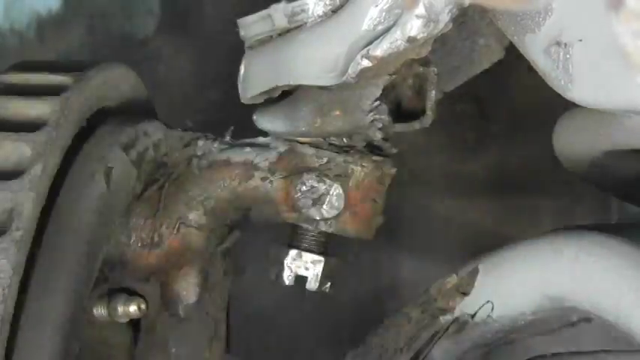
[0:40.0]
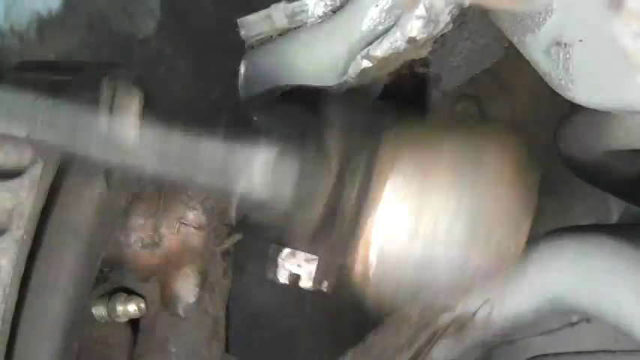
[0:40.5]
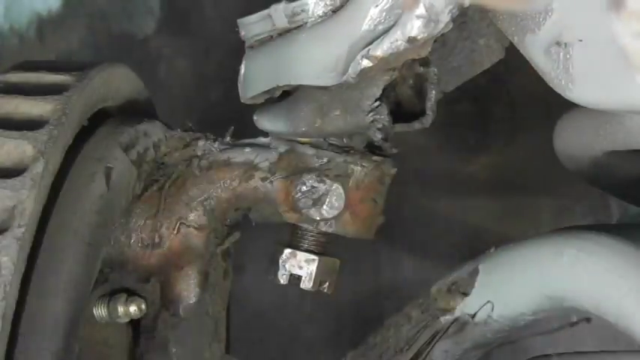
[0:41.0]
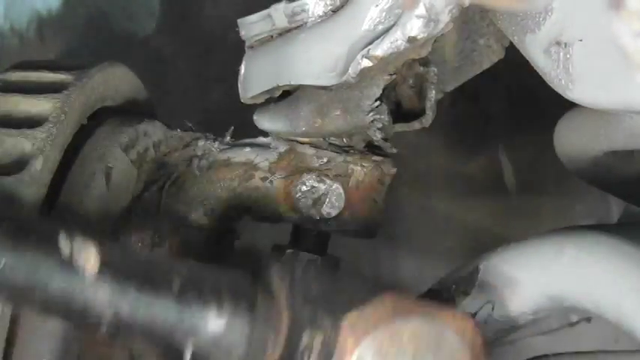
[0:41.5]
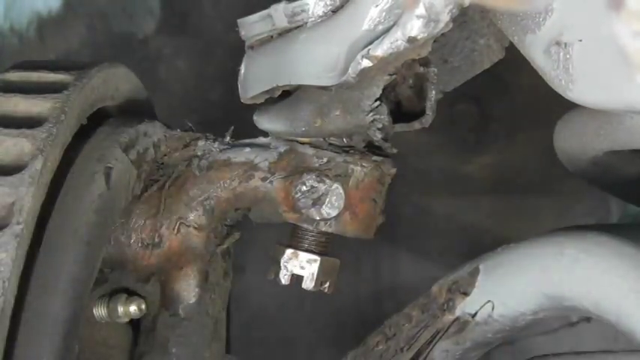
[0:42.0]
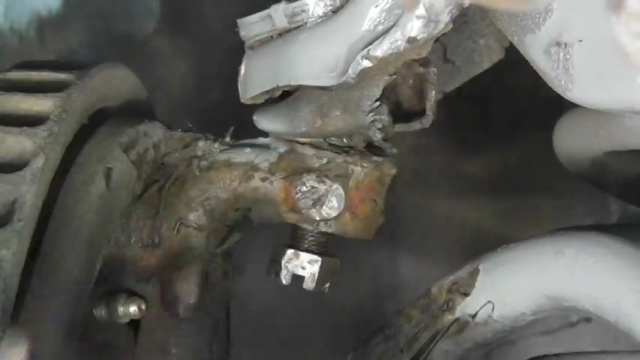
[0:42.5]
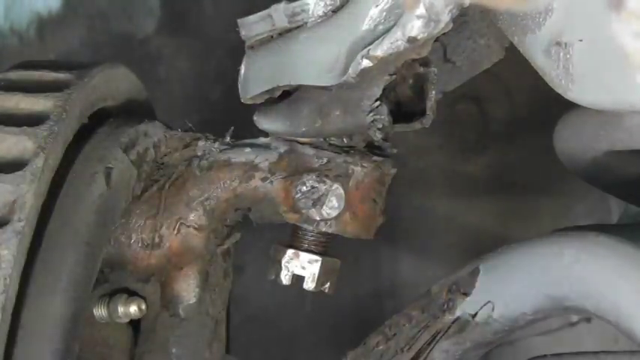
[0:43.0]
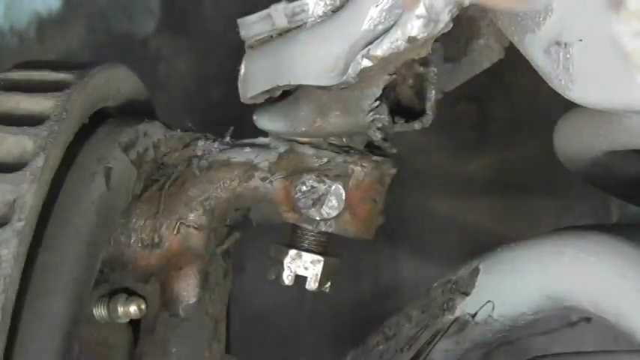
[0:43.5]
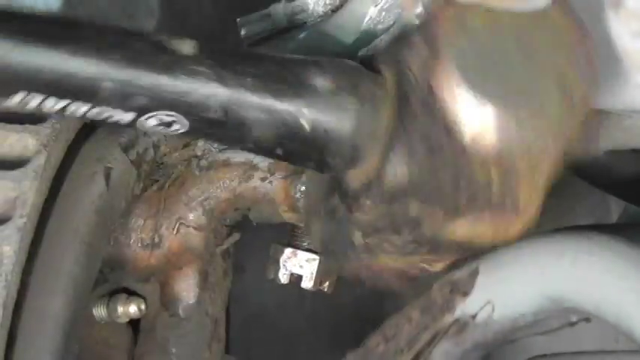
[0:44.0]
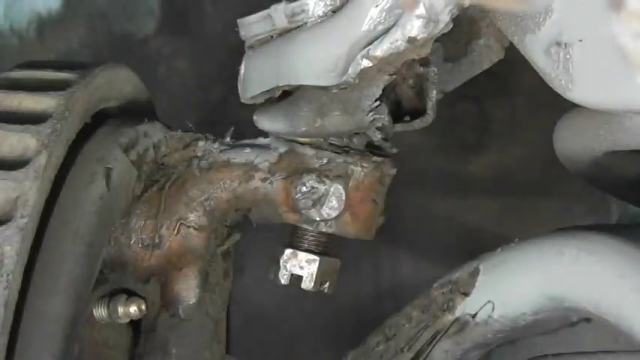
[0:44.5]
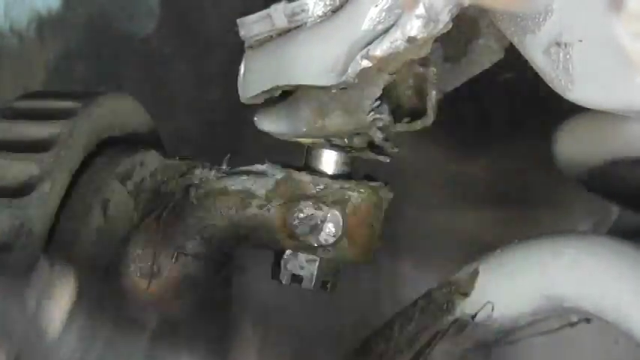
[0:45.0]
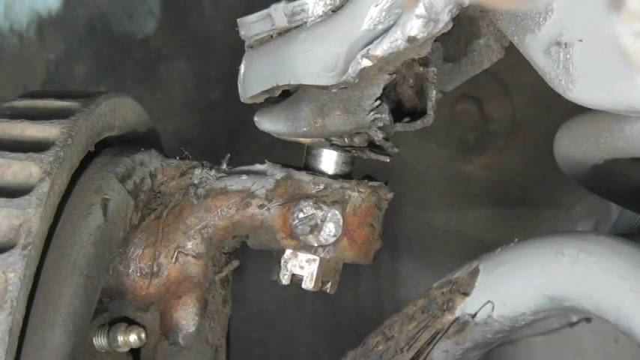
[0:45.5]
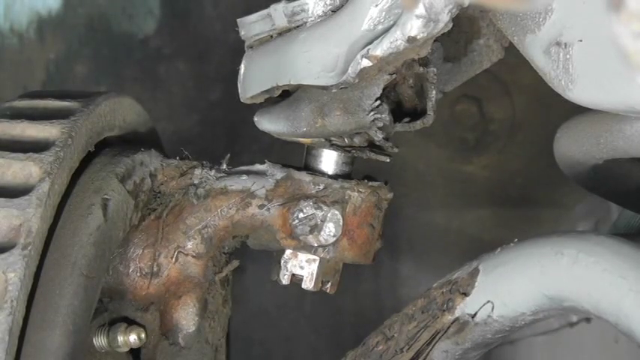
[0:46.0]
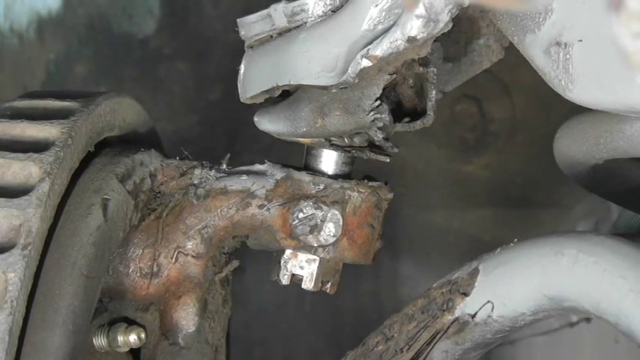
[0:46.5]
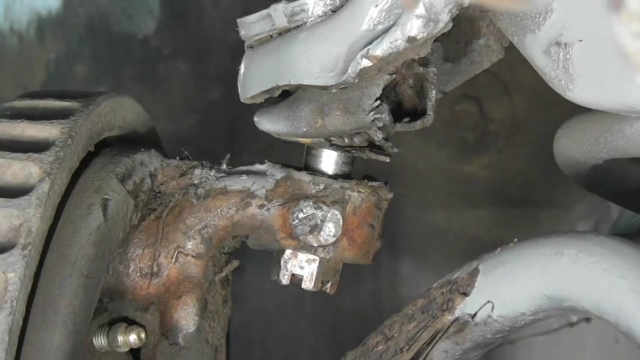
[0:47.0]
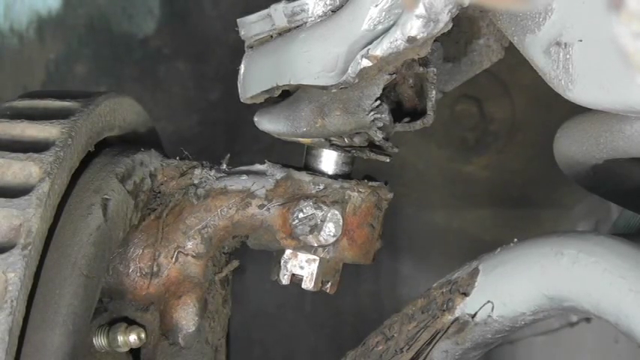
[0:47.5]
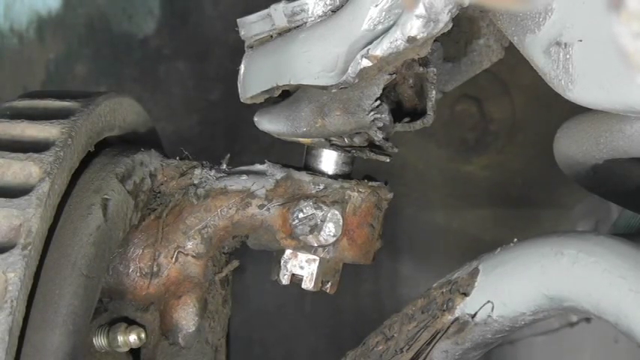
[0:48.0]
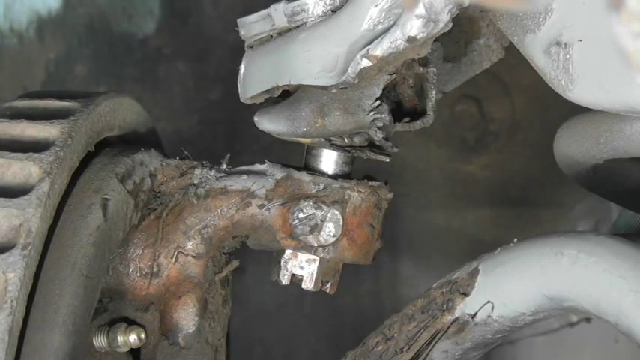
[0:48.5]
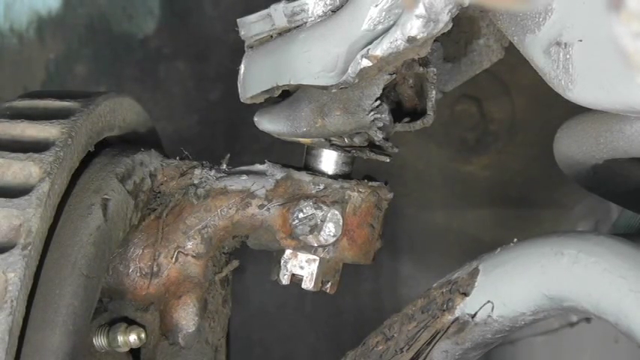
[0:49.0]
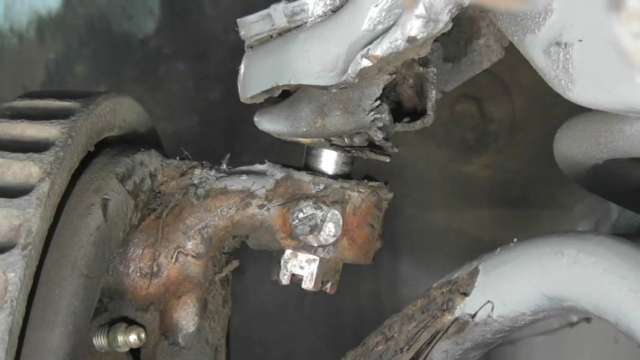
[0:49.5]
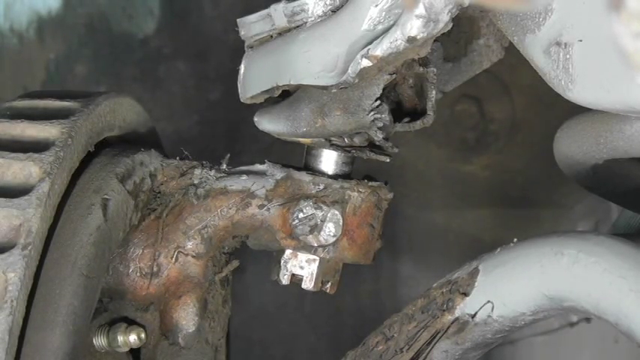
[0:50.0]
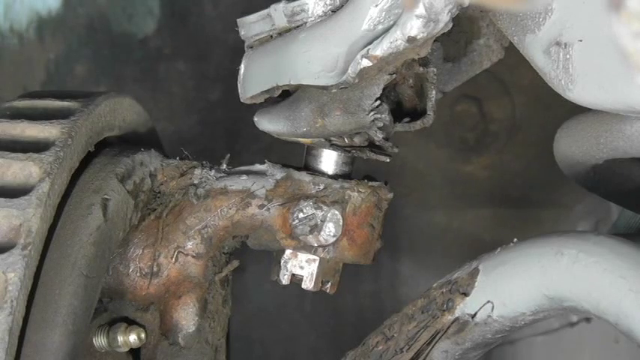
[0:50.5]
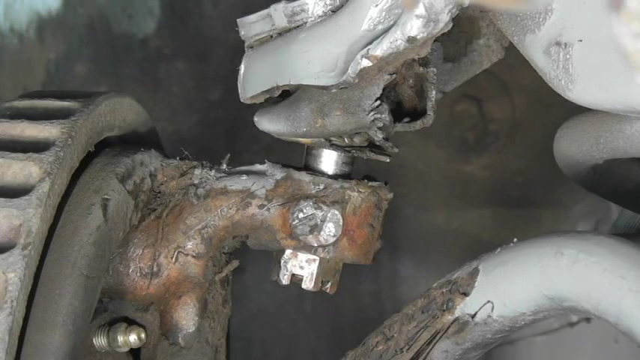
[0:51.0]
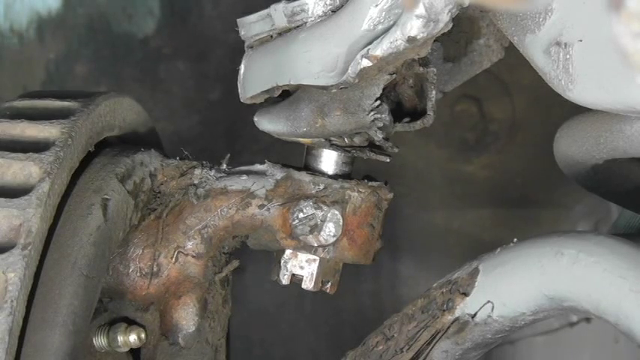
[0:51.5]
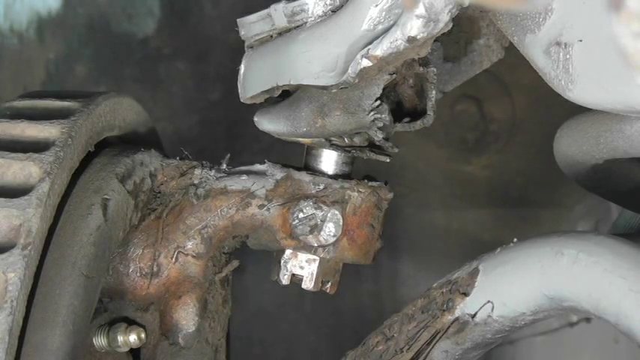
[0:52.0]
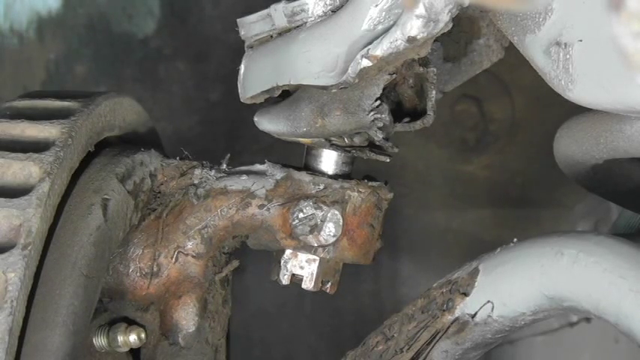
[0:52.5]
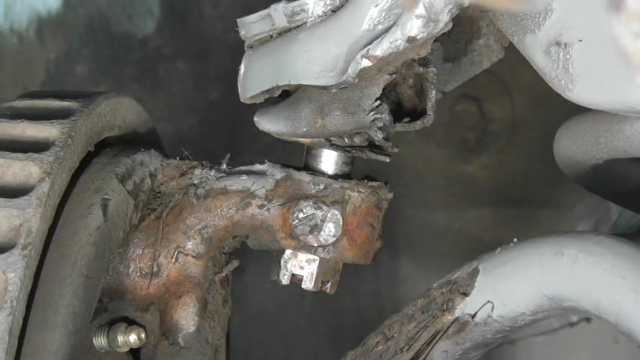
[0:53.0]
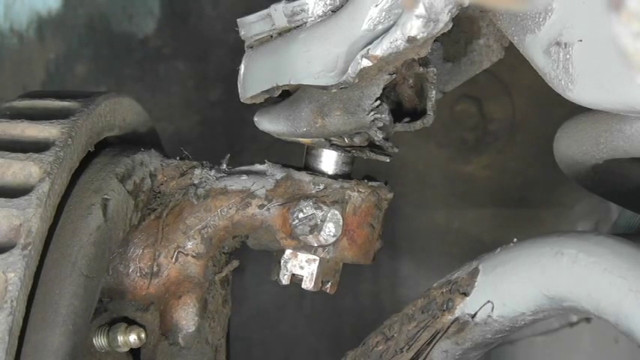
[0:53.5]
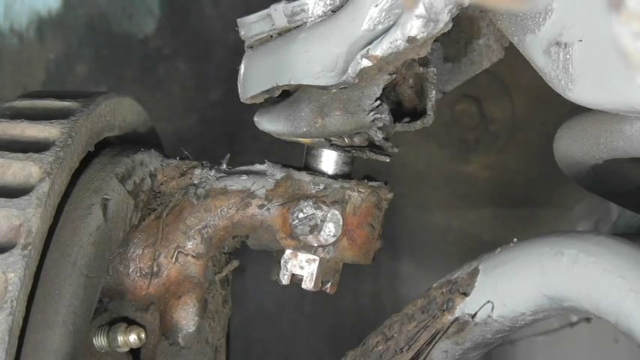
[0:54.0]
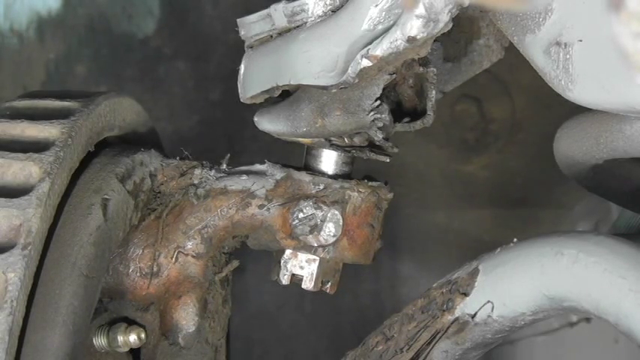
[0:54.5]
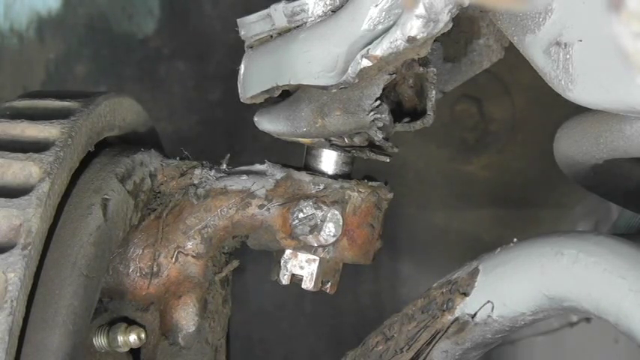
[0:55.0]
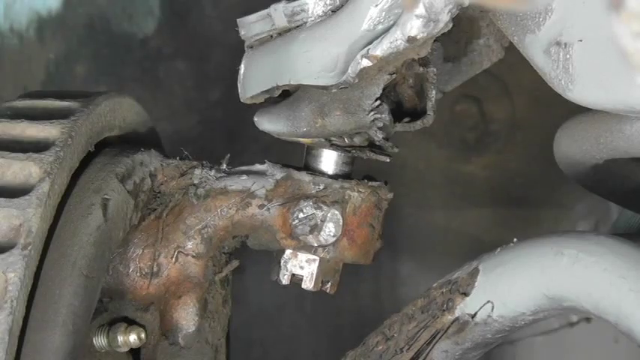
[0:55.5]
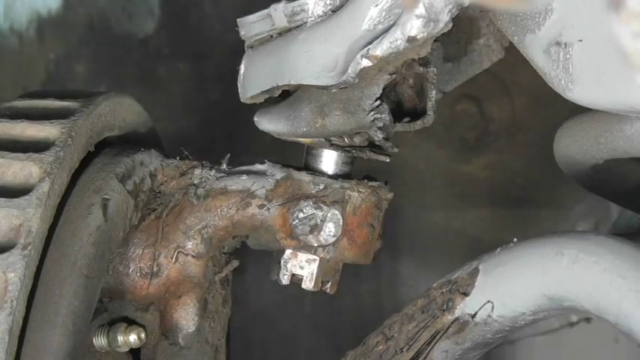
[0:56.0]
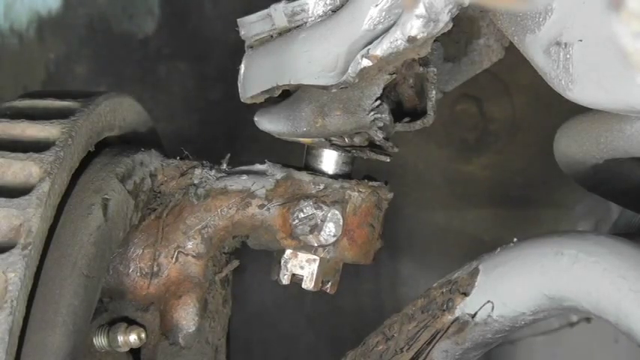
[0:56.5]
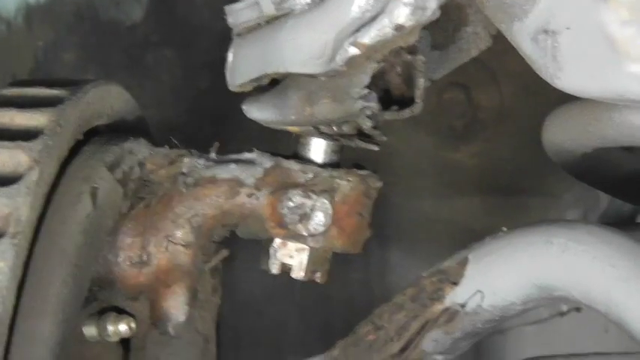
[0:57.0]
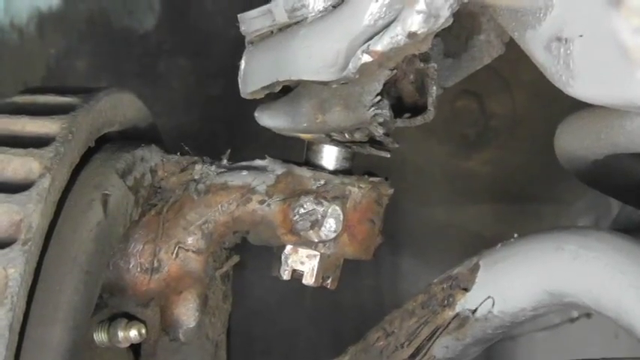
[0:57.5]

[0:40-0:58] The metal hammer continues striking the arm, and it appears to be loosening the nut and bolt holding it all together. It strikes an additional 10 to 15 times. Very slowly, the arm or pin holding the piece together, which is attached at the other end by a large bolt, seems to be rising up out of the wheel assembly, coming out at a glacial pace with each hammer strike. The hammer does appear to be working at loosening the nut and bolt. There is damage and breakage in the interior portion of the wheel well.